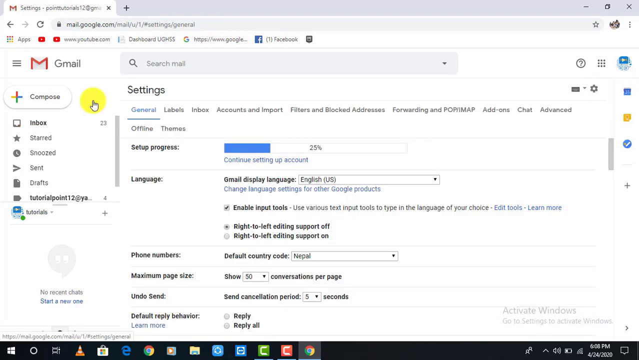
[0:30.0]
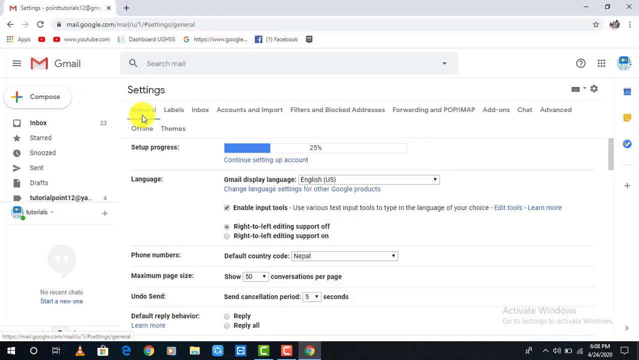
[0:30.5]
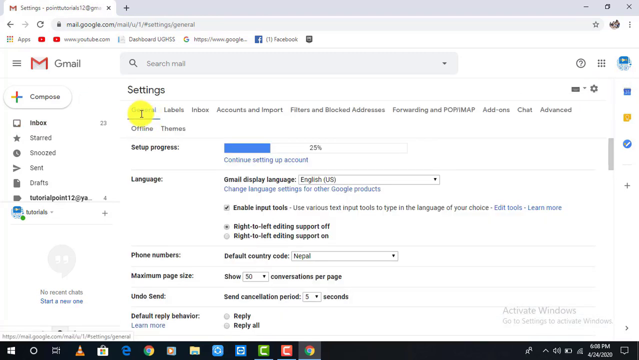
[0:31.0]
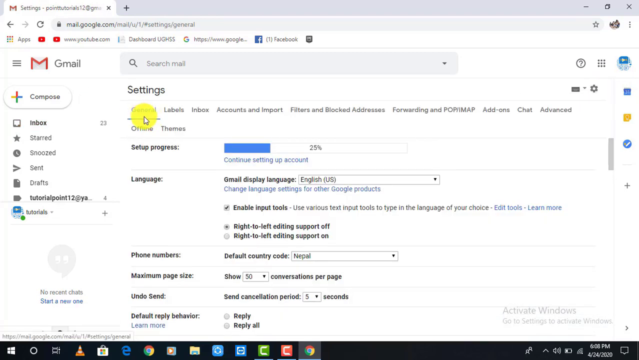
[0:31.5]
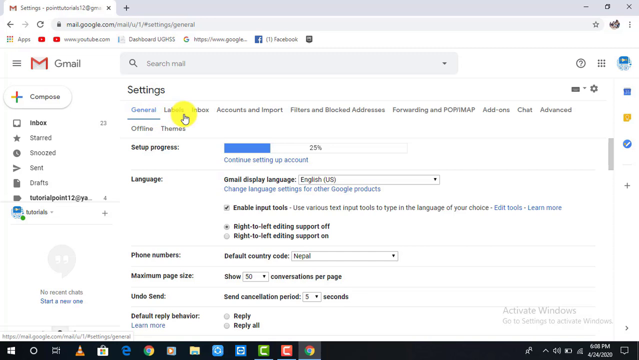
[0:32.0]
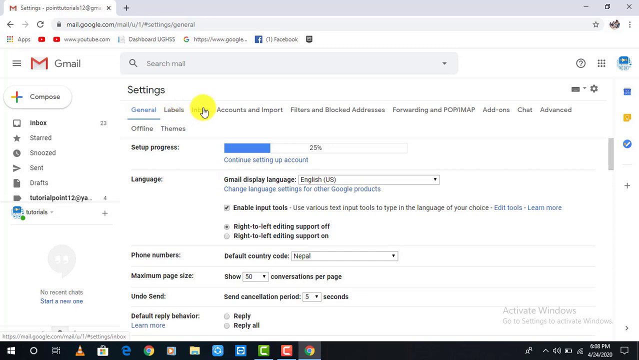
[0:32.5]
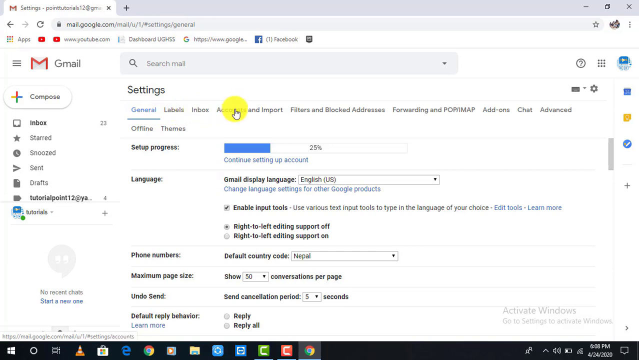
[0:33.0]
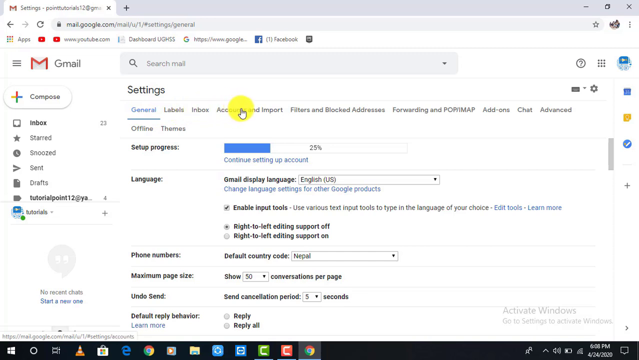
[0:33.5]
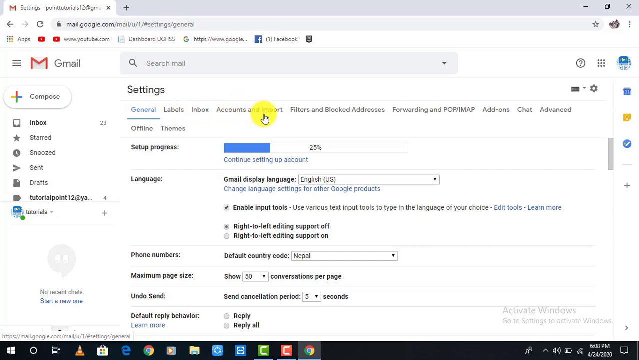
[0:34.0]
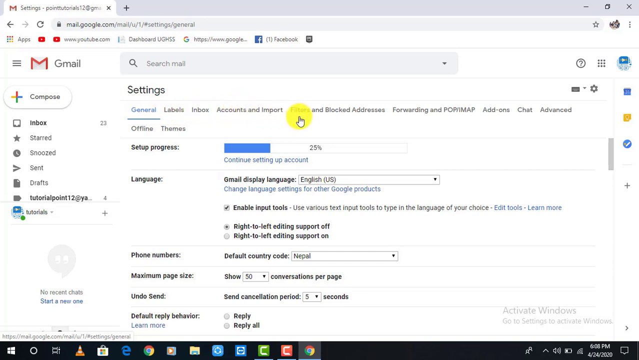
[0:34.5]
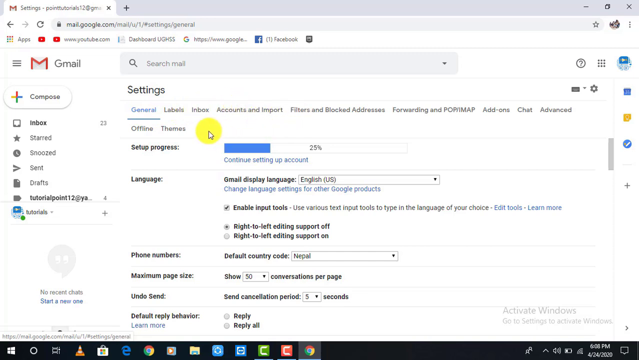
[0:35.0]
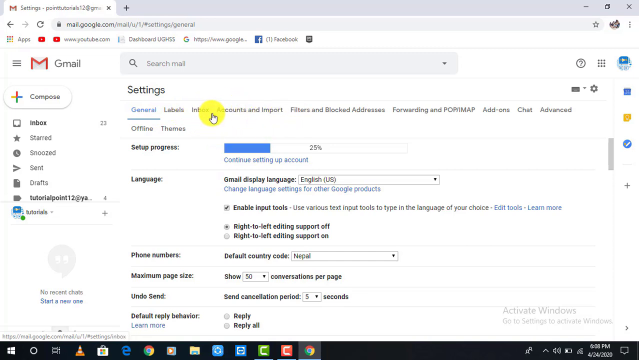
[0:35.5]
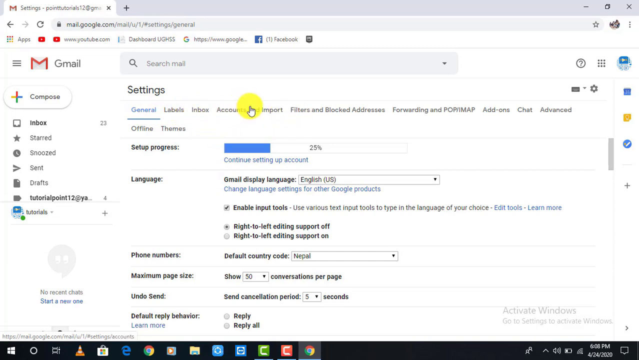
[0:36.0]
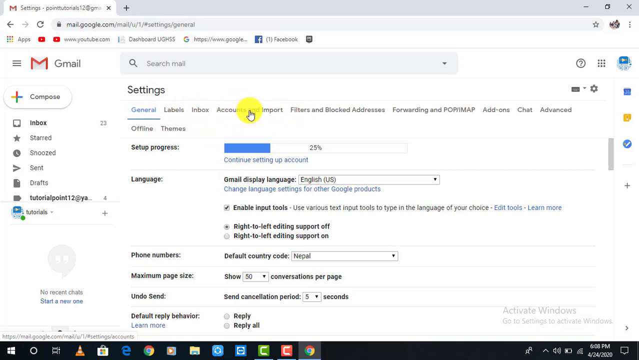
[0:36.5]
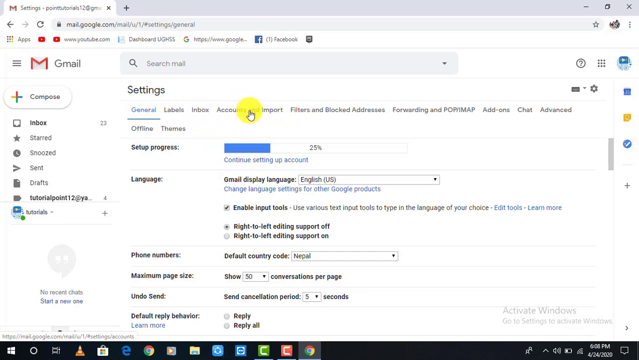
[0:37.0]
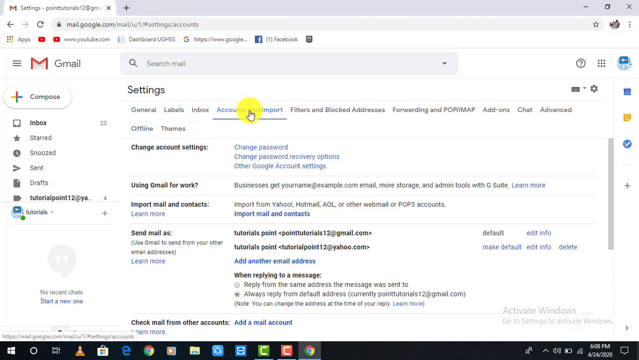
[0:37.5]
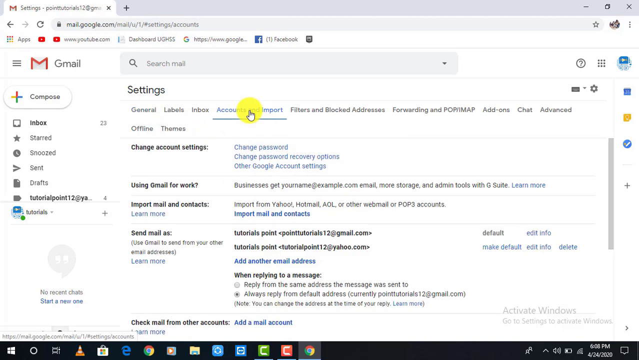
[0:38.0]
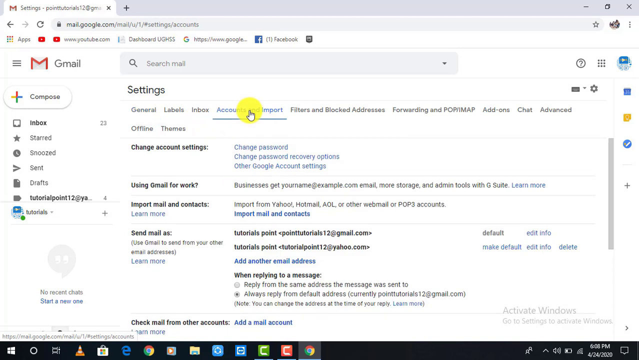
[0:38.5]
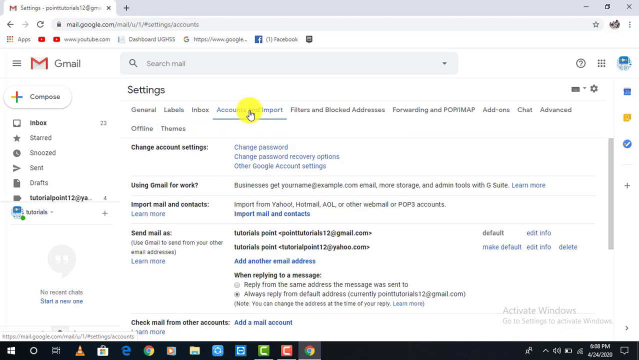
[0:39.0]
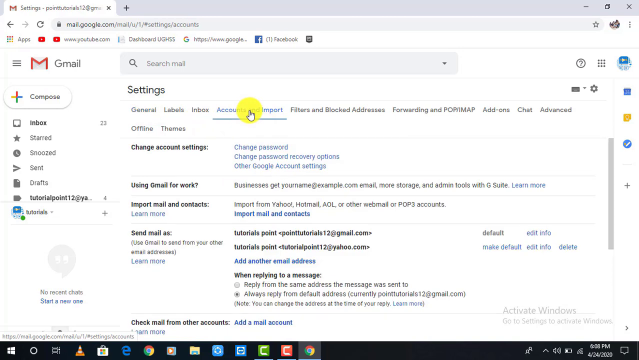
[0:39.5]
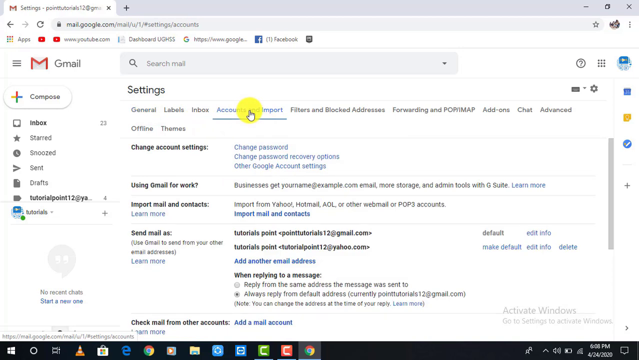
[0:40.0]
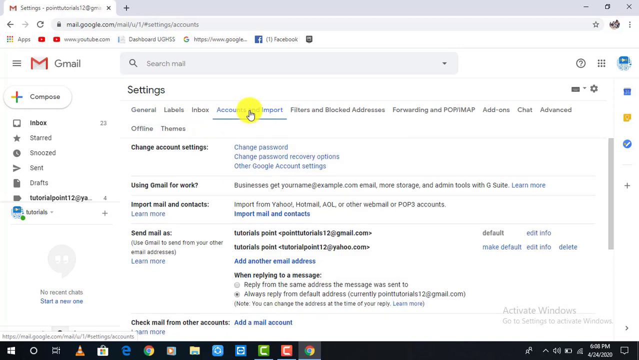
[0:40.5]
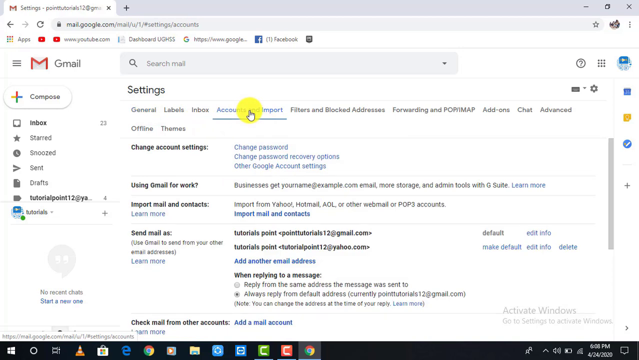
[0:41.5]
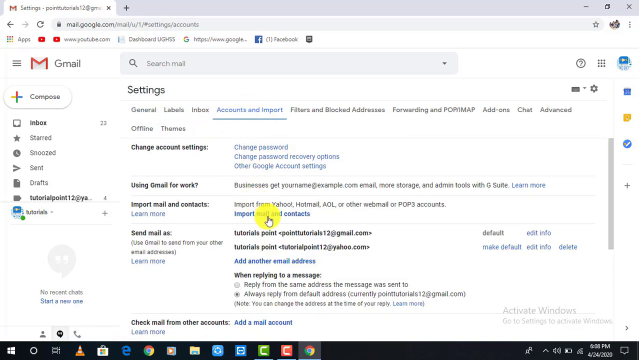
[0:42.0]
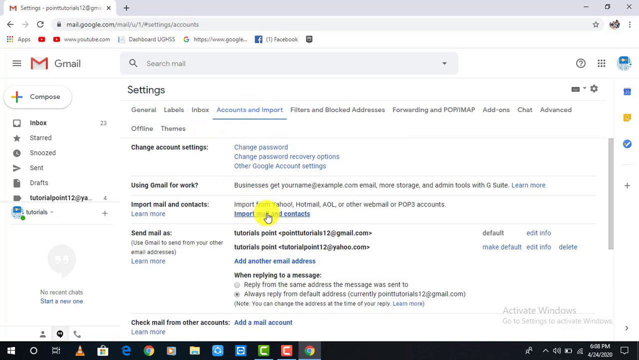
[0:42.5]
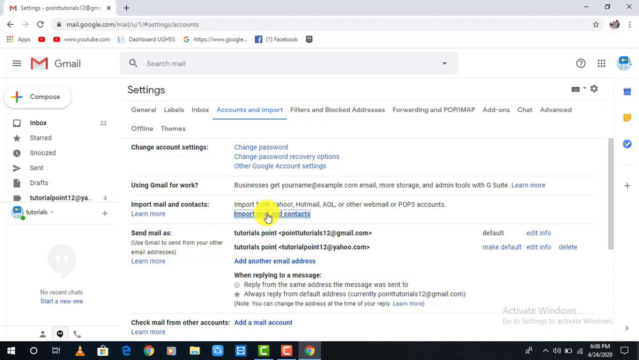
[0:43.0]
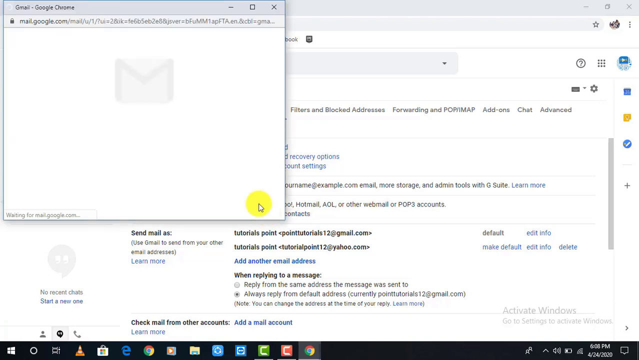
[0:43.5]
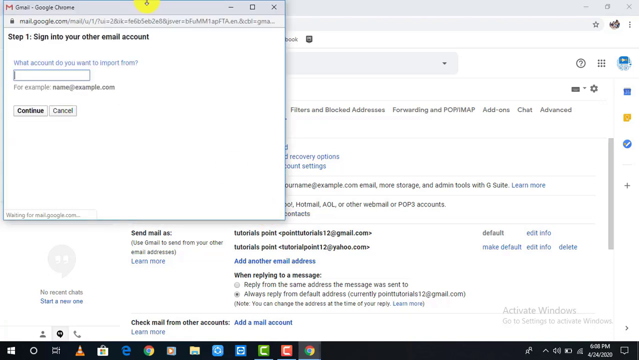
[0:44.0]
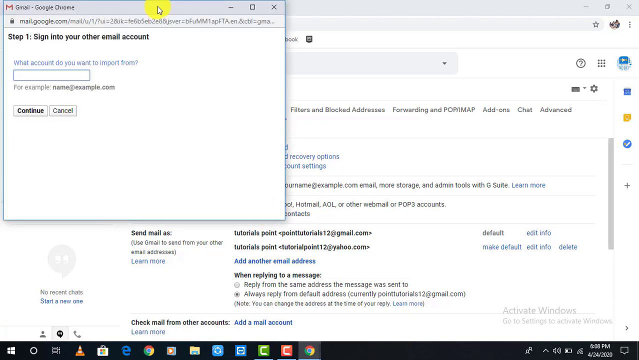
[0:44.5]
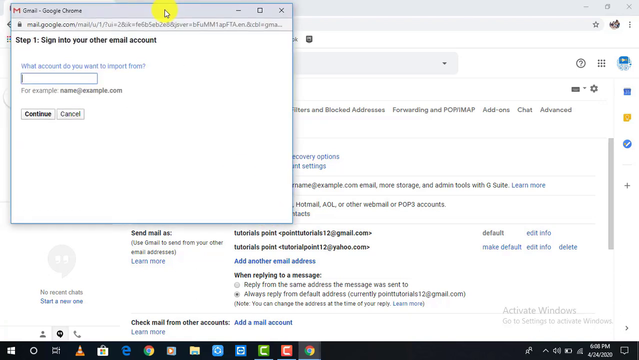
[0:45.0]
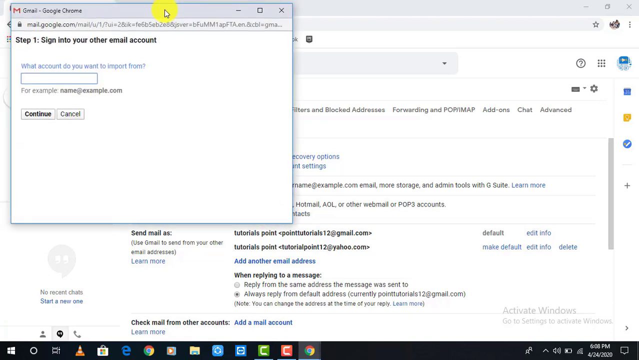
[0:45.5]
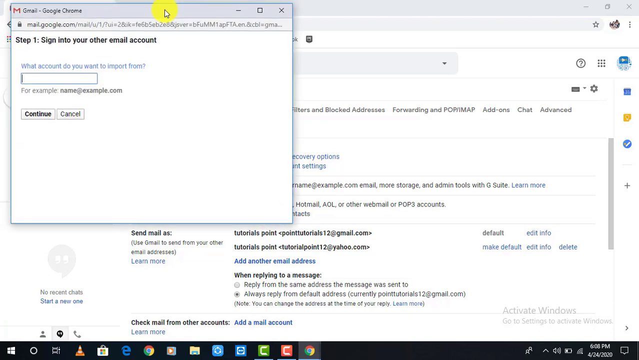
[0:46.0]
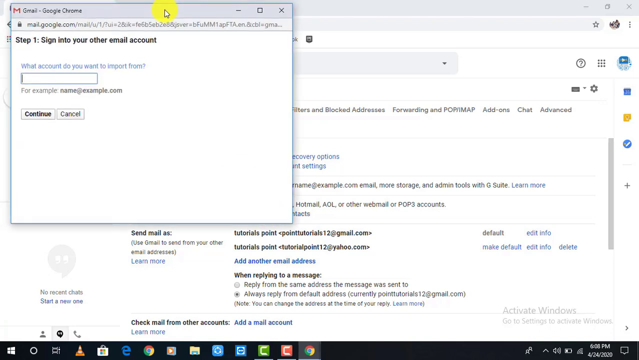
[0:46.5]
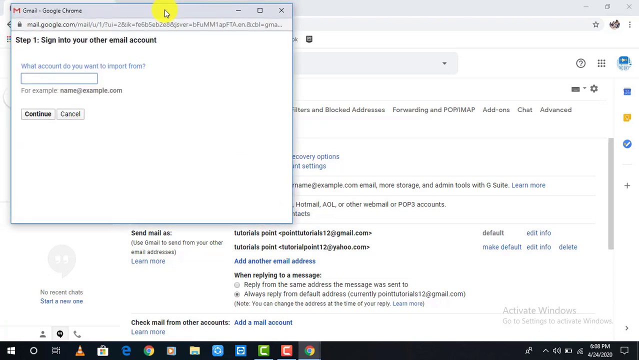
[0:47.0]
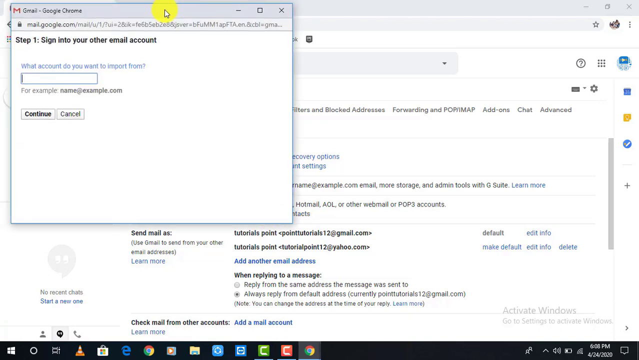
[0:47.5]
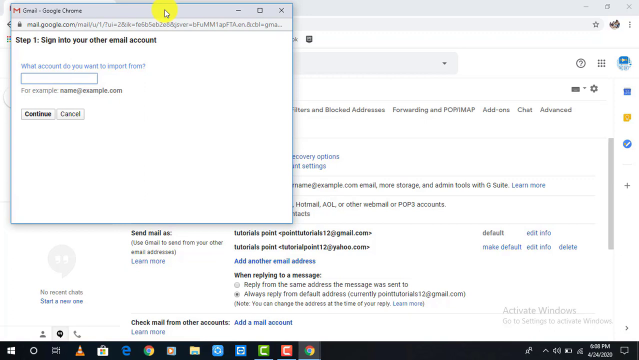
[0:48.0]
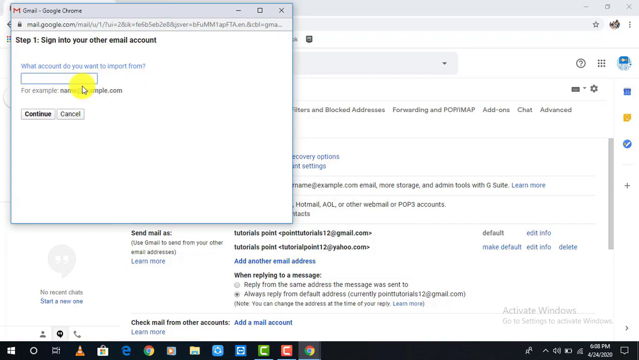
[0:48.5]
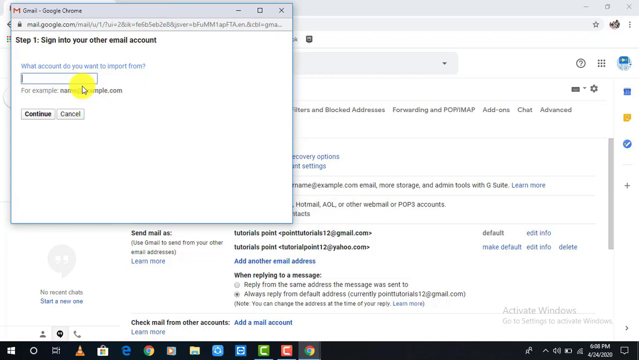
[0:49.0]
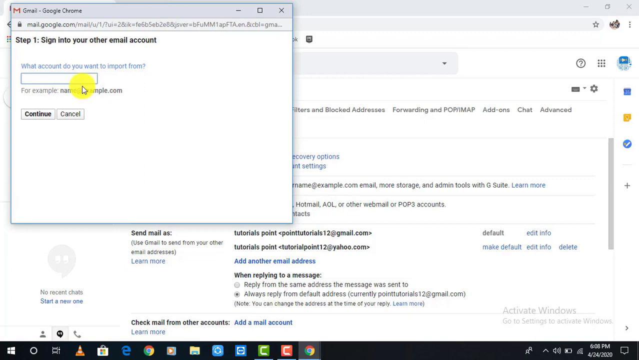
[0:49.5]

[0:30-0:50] Still in Gmail, the user has clicked on Settings. The settings page has tabs for General, Labels, Accounts and Imports, Filters and Blocked Addresses, Forwarding, Add-ons, Chat, and Advanced, with General selected. The yellow circle is still on the pointer, and the user clicks on Accounts. Options appear under change account settings: change password, change password recovery options, and other Google account settings. There is a section on using Gmail for work with items to learn more about, and an import mail and contacts section with a hyperlink. The user apparently clicks that hyperlink, and a pop-up appears that says "sign into your other email account," with a box labeled "what account do you want to import from?" The mouse pointer still has the yellow circle on it.